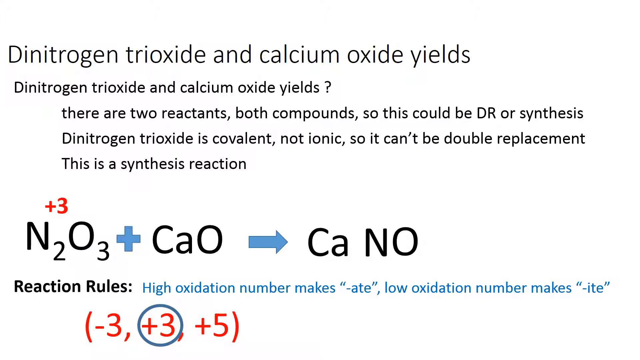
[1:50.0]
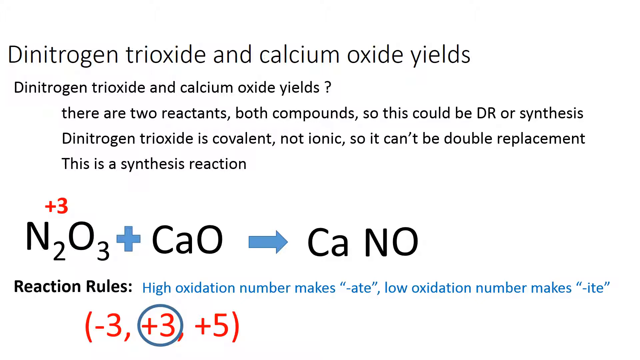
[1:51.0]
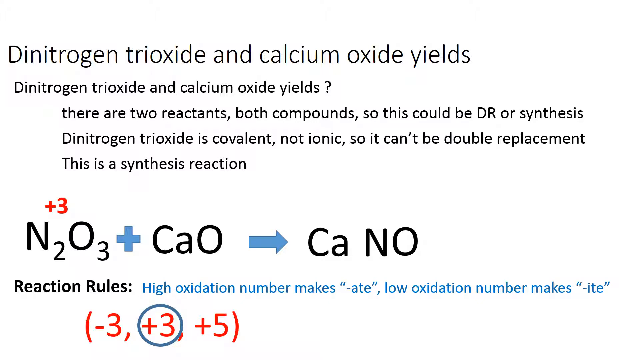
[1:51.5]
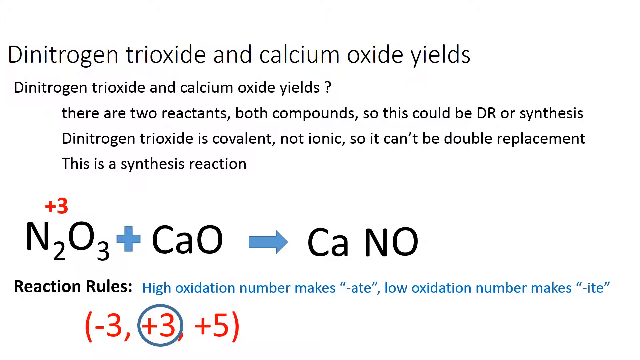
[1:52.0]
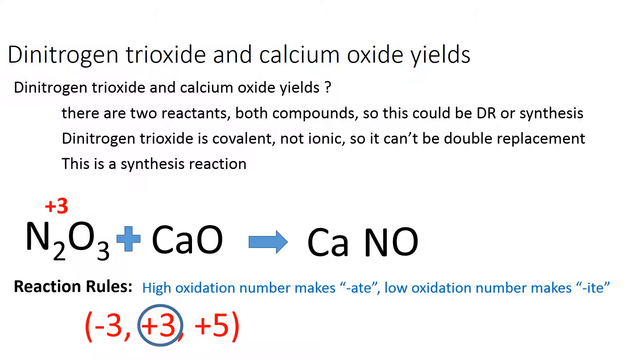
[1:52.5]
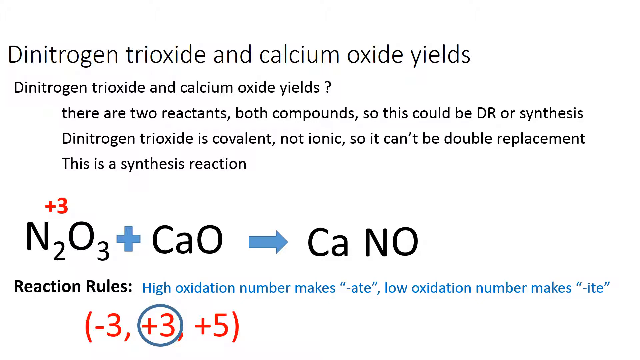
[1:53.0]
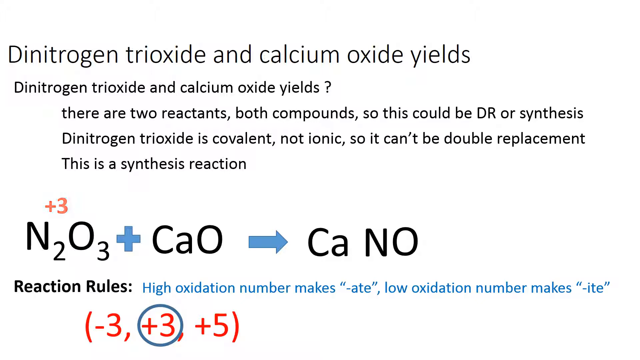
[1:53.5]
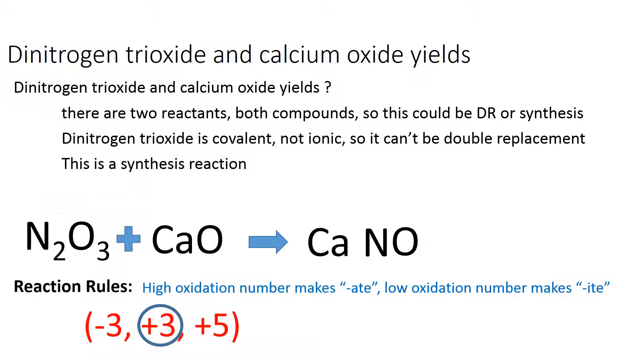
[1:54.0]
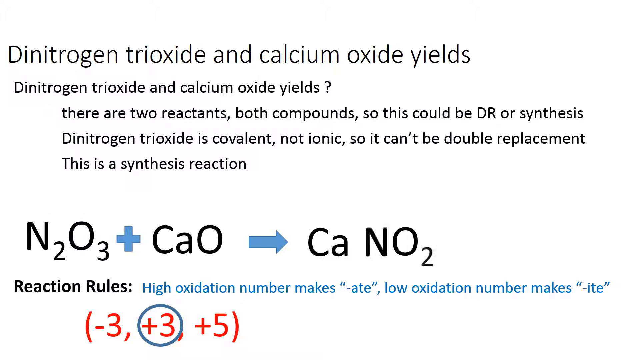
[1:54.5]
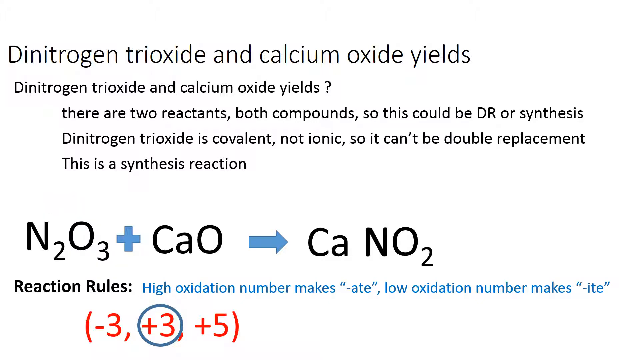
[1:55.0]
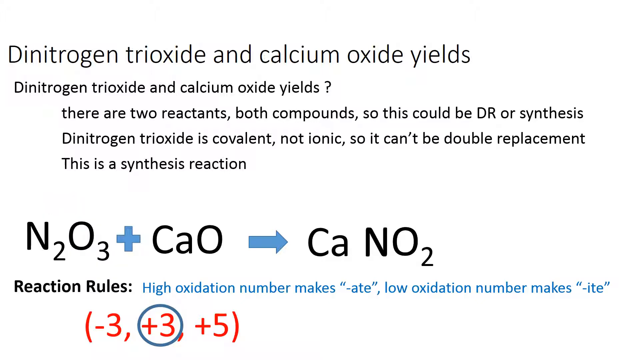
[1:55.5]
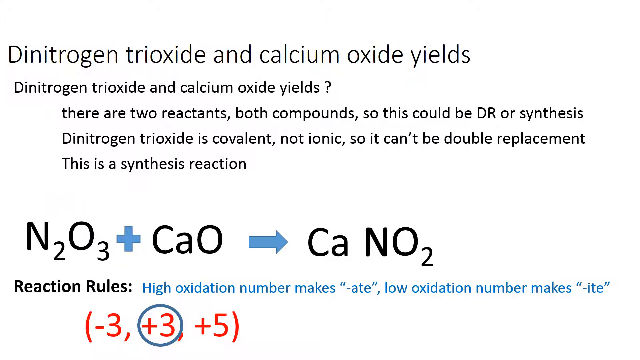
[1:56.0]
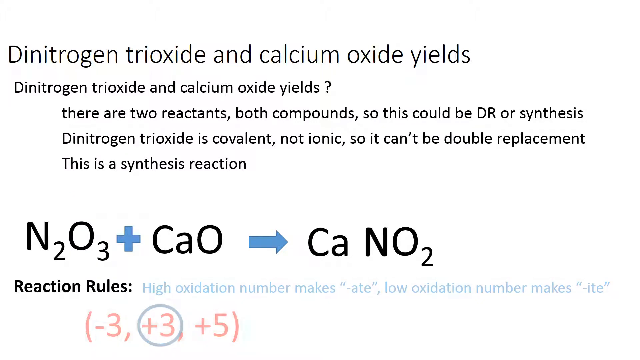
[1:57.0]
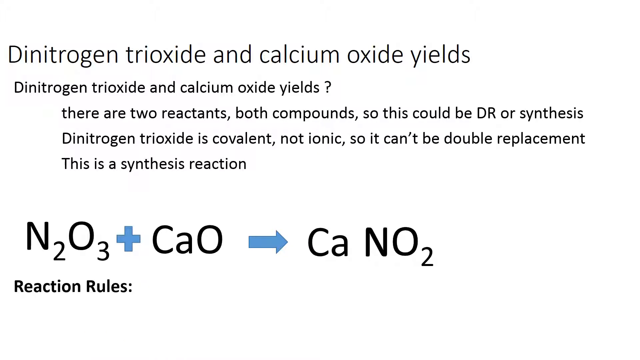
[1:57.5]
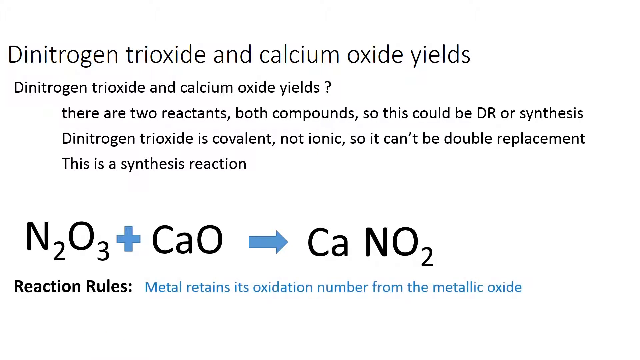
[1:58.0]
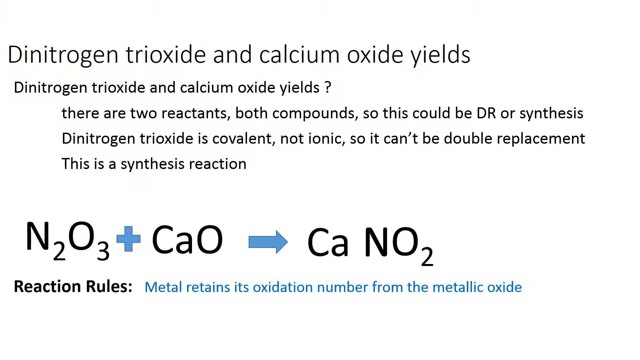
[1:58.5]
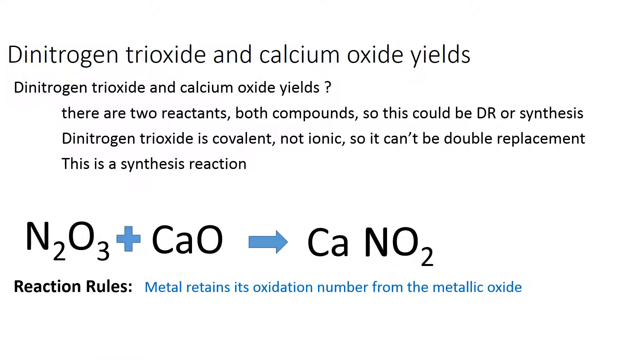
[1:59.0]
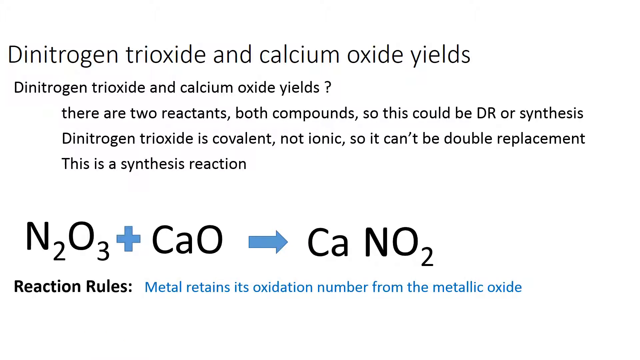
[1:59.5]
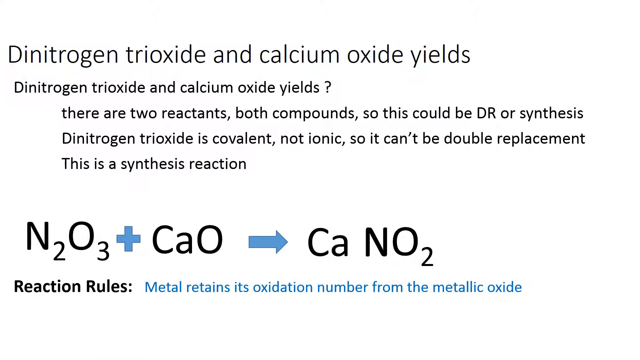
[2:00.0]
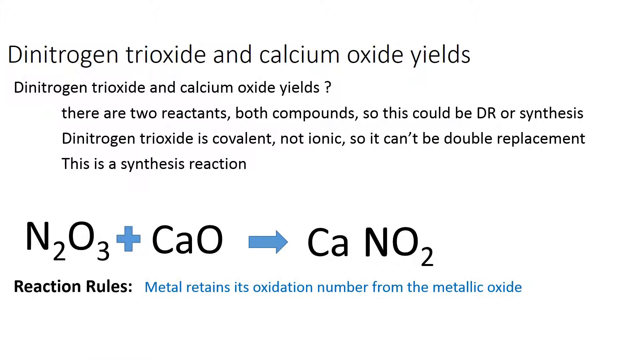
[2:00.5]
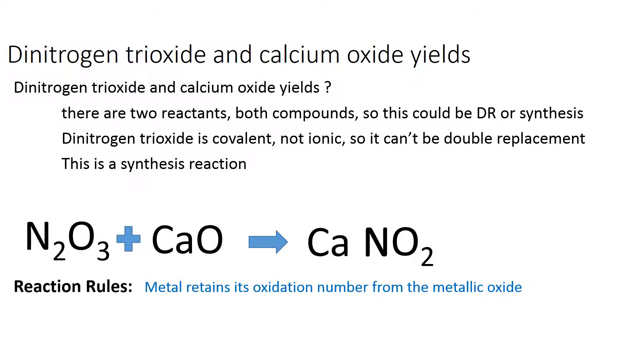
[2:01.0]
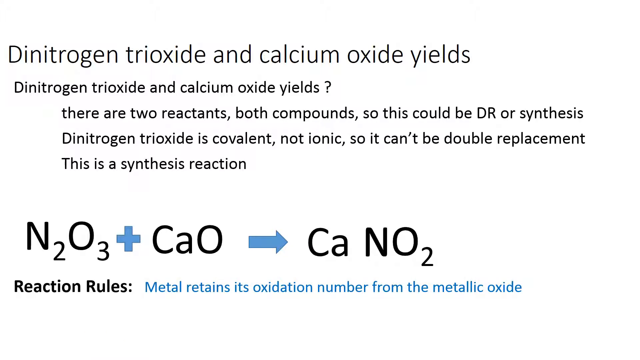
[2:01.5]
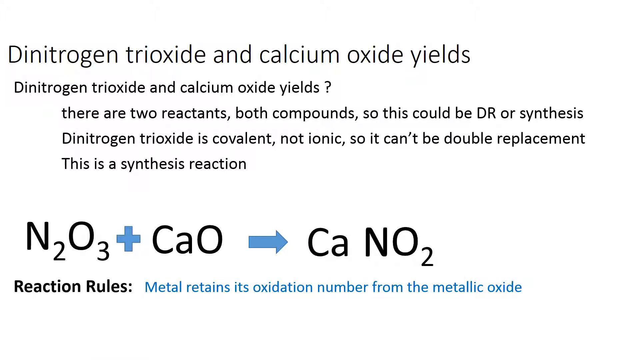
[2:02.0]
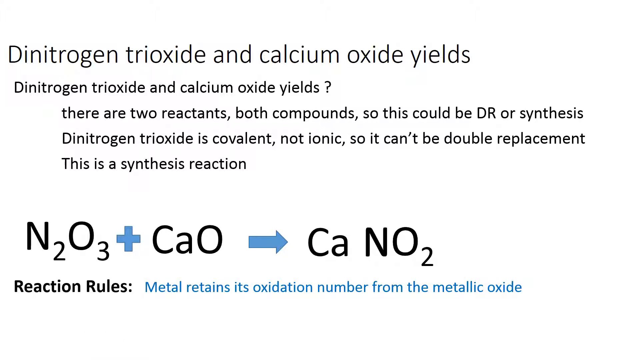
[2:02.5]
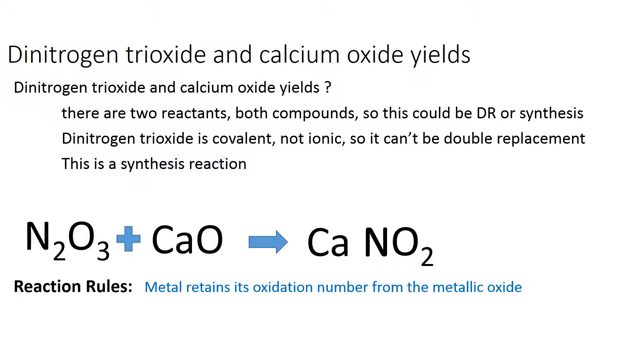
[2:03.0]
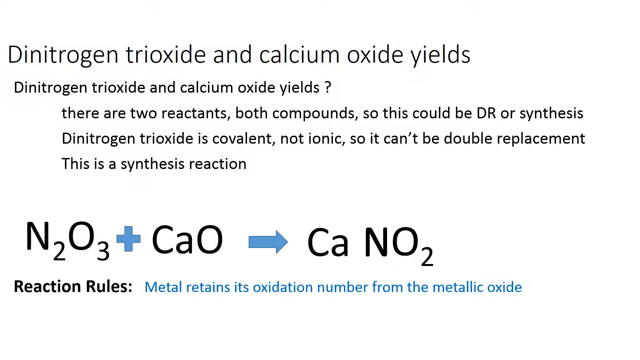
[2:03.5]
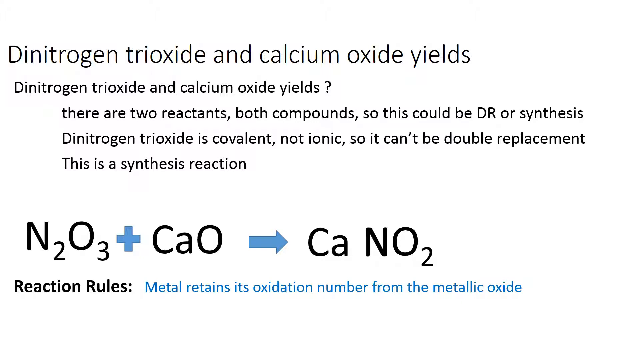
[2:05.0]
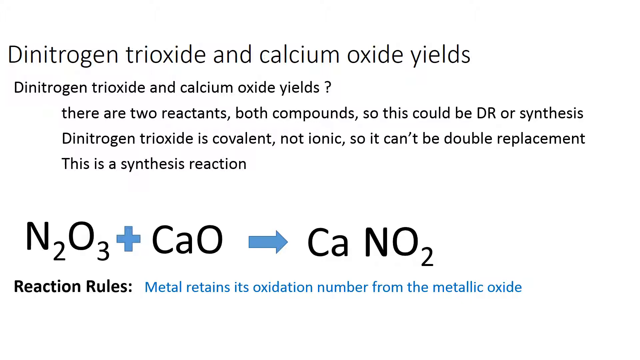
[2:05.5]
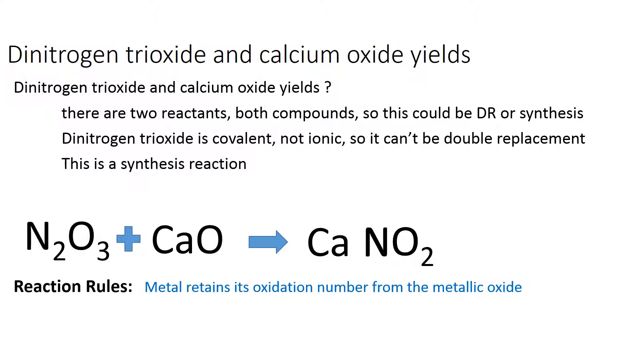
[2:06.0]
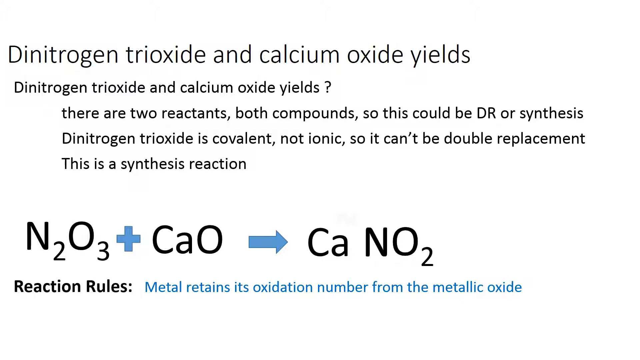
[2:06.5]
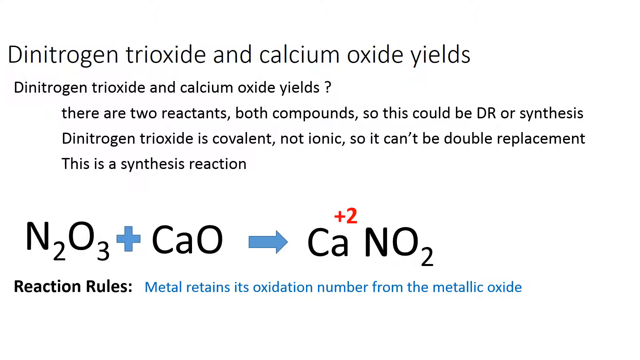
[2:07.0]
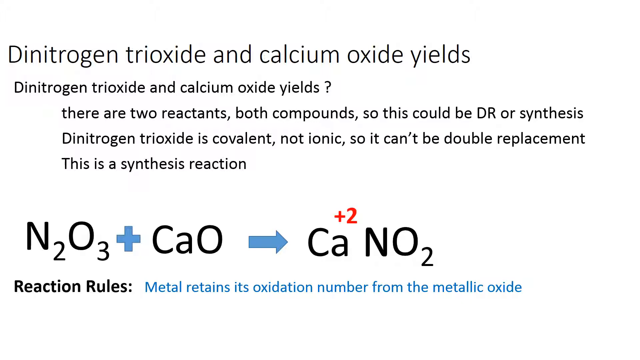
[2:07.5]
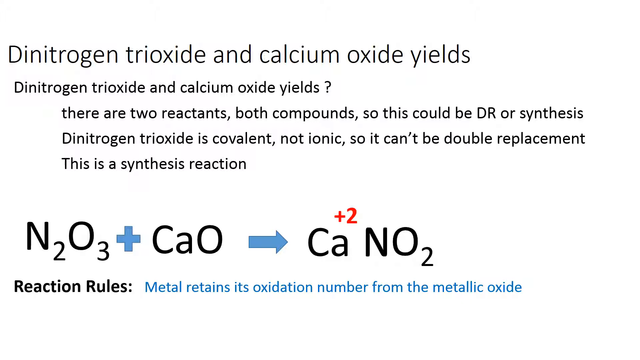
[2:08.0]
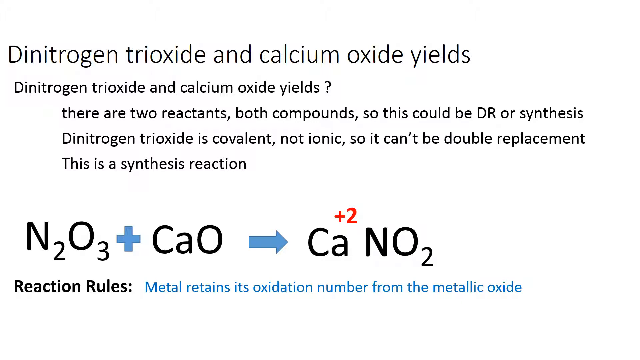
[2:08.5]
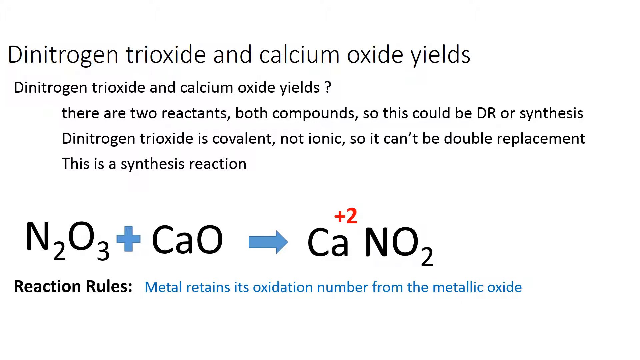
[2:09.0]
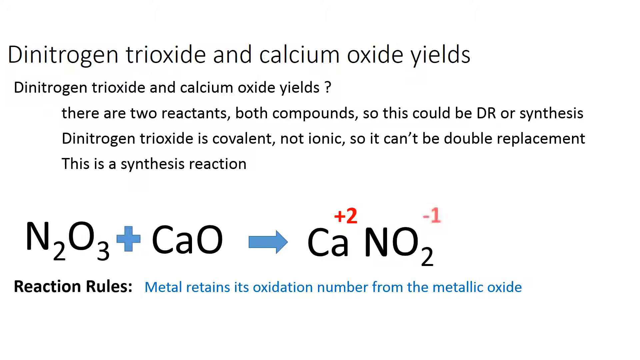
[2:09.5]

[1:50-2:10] A white background has lots of text on it. Black text at the top says "Dinitrogen Trioxide and calcium oxide yields." Beneath it, smaller black text says "Dinitrogen trioxide and calcium oxide yields" with a ? to its right, followed by black lines saying "there are two reactants, both compounds, so this could be DR or synthesis," "Dinitrogen trioxide is covalent, not ionic, so it can't be double replacement," and "This is a synthesis reaction." Beneath that is larger black text "N2O3," a blue + mark, and black text "CaO." Red text that says "+3" is above "N2O3." To the right is a blue arrow, black text "Ca," and black text "NO." Below is black text "Reaction Rules:" with blue text saying "High oxidation number makes "-ate", low oxidation number makes "-ite"," and beneath that red text "(-3, +3, +5)" with a blue circle around the +3. The red text above "N2O3" disappears. A 2 appears at the end of "NO" to make "NO2." The text at the bottom disappears except "Reaction Rules:", and to its right is new blue text that says "Metal retains its oxidation number from the metallic oxide." A red "+2" appears above and between "Ca" and "NO2." A "-1" appears above and to the right of "NO2."